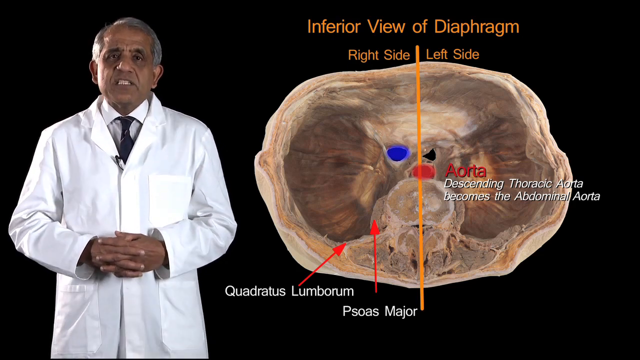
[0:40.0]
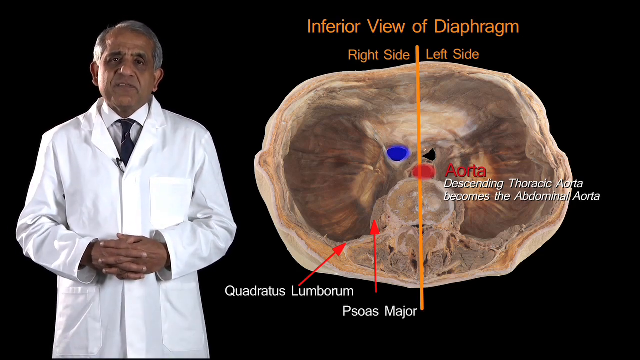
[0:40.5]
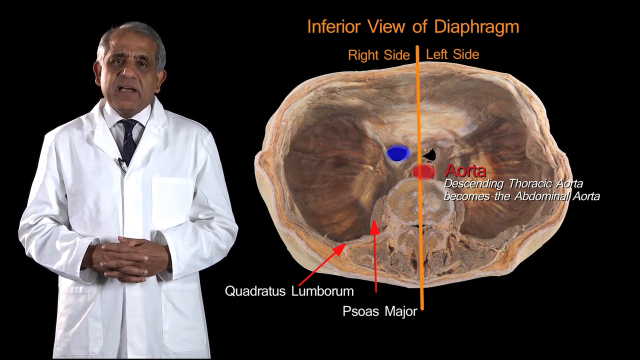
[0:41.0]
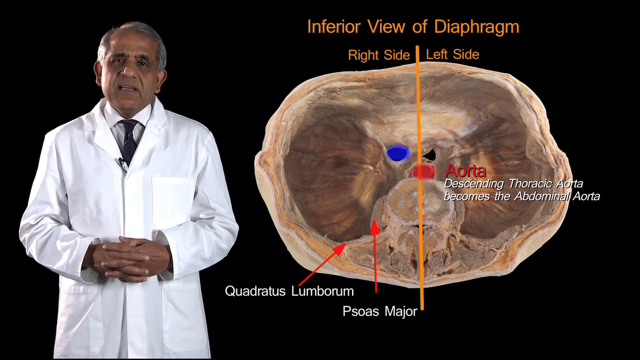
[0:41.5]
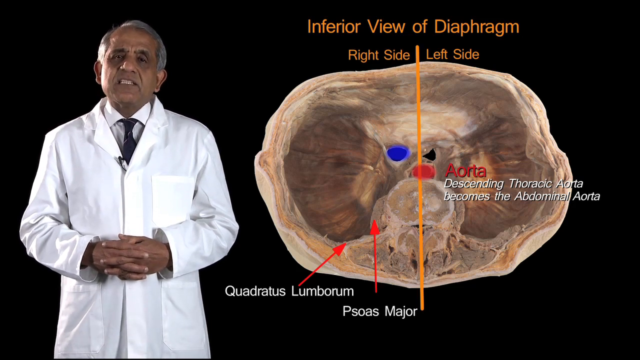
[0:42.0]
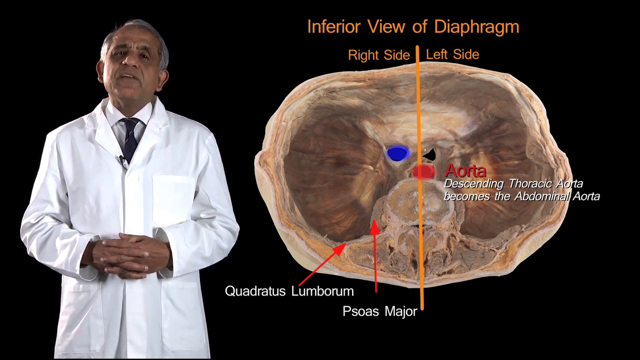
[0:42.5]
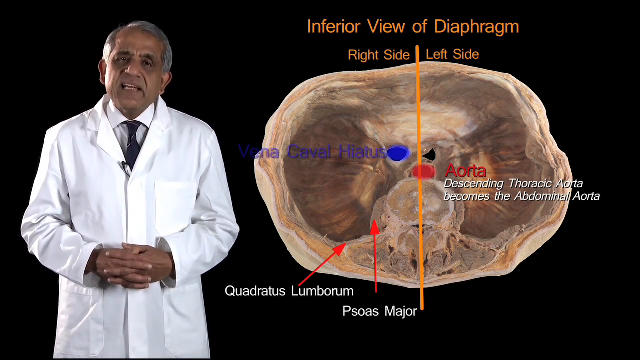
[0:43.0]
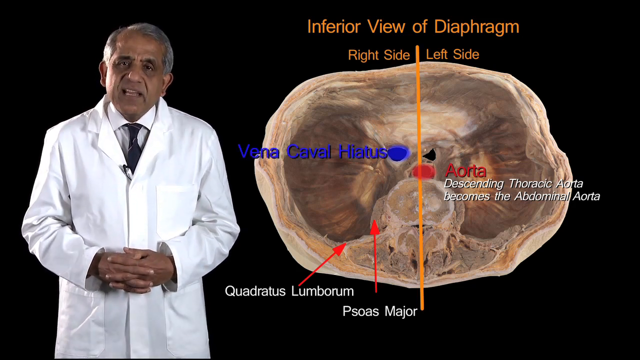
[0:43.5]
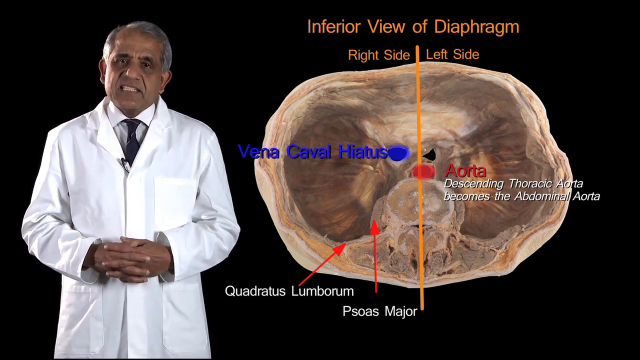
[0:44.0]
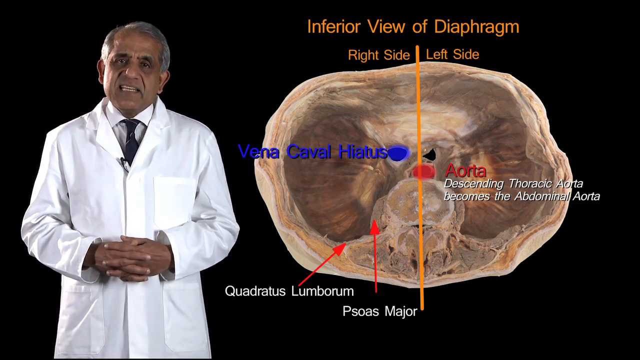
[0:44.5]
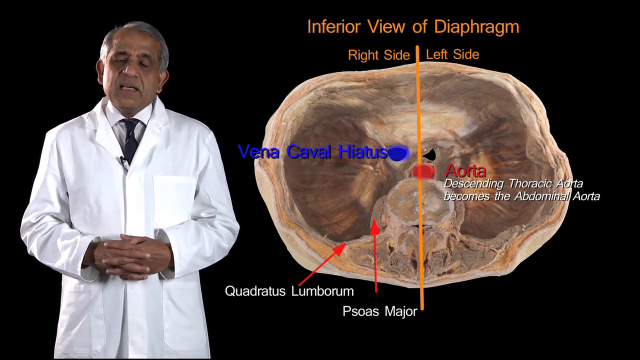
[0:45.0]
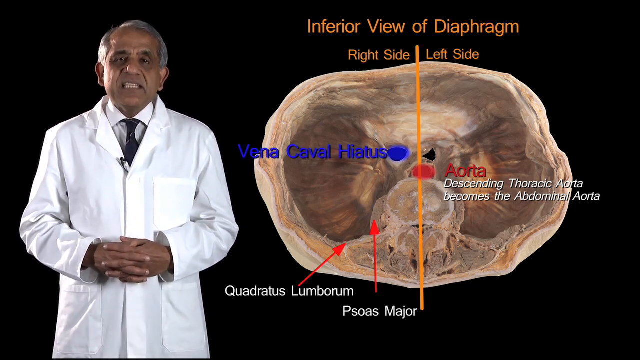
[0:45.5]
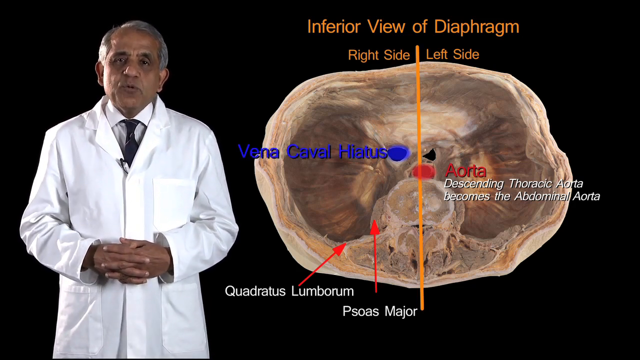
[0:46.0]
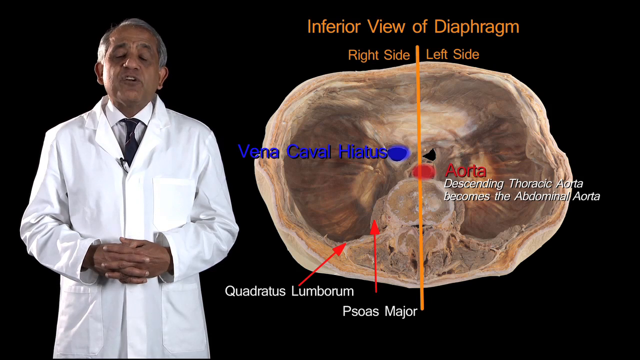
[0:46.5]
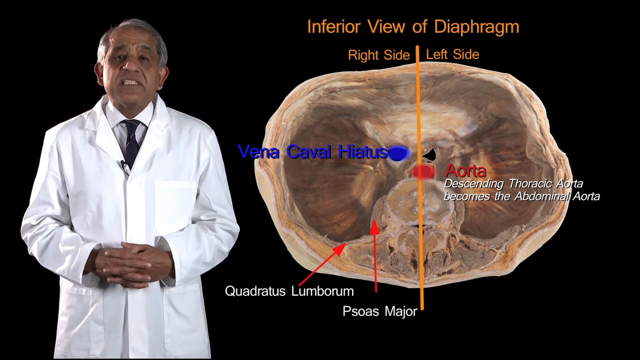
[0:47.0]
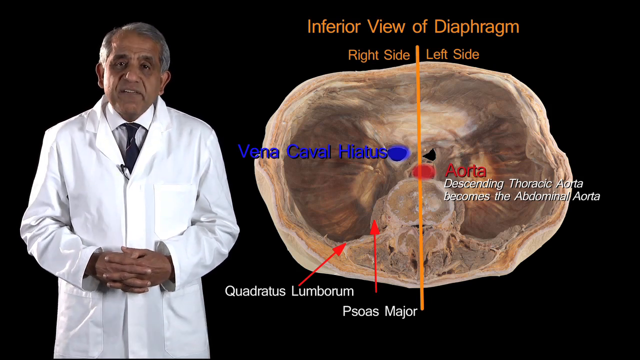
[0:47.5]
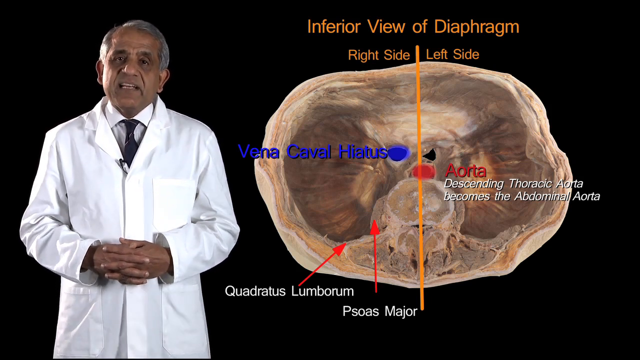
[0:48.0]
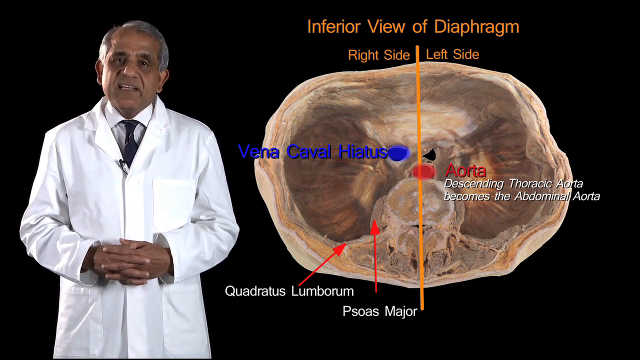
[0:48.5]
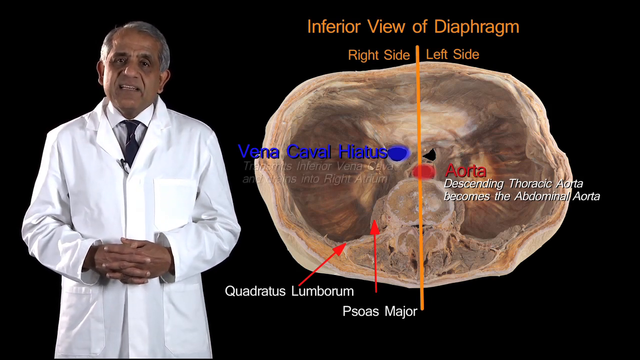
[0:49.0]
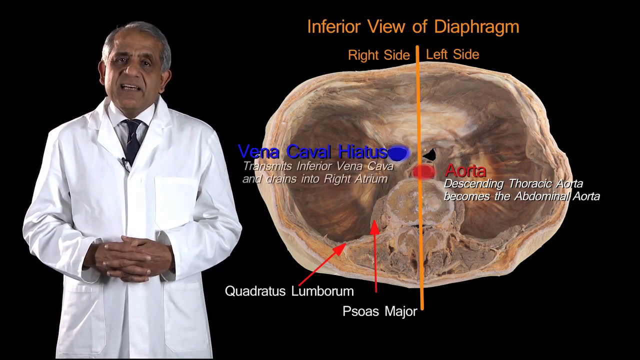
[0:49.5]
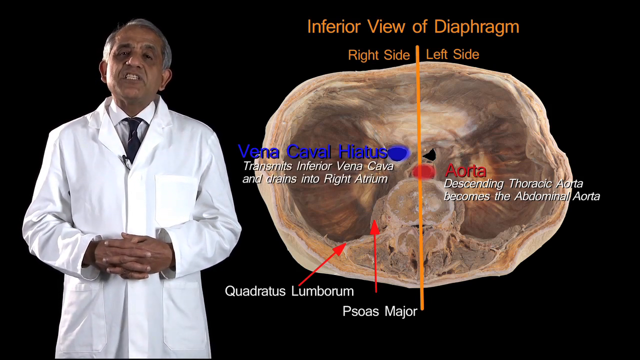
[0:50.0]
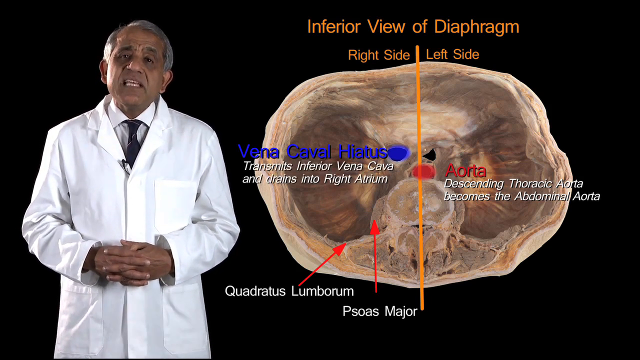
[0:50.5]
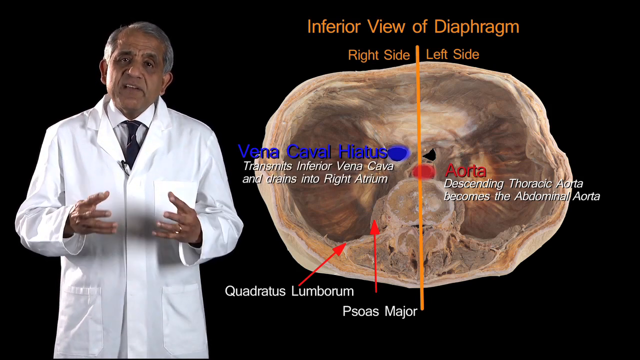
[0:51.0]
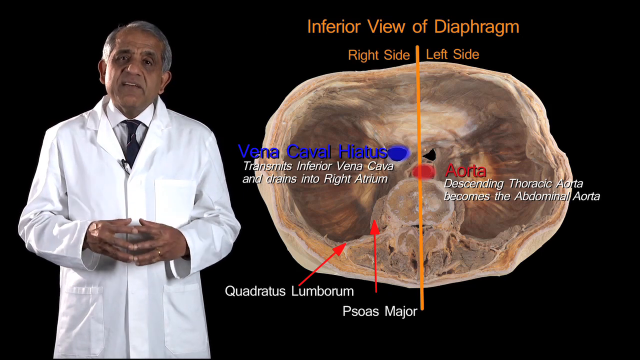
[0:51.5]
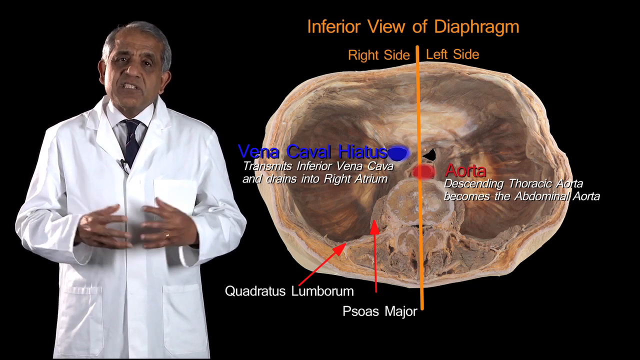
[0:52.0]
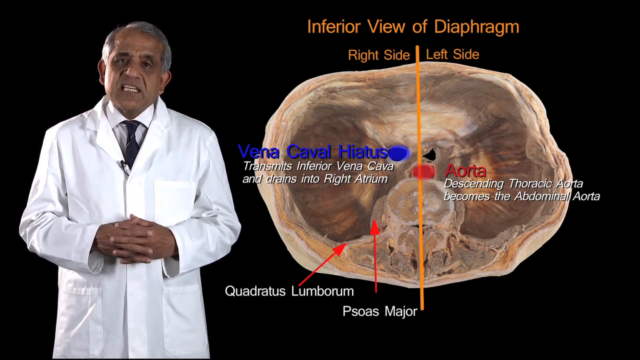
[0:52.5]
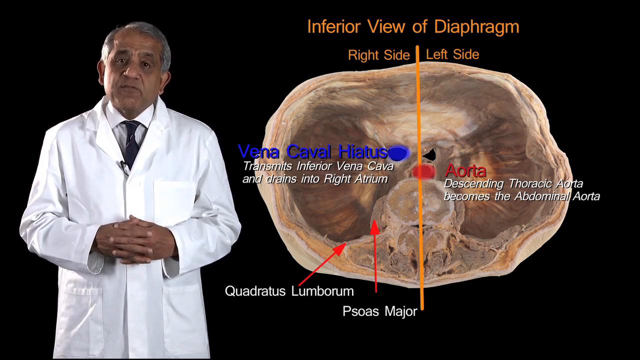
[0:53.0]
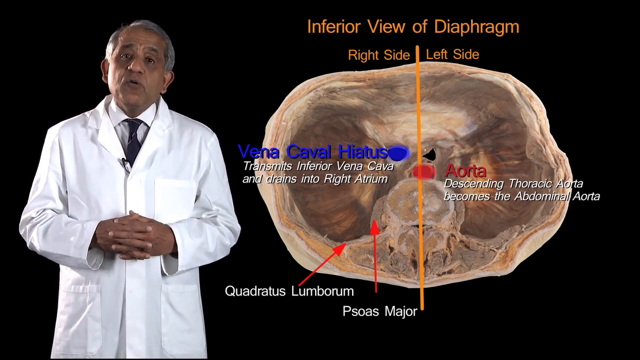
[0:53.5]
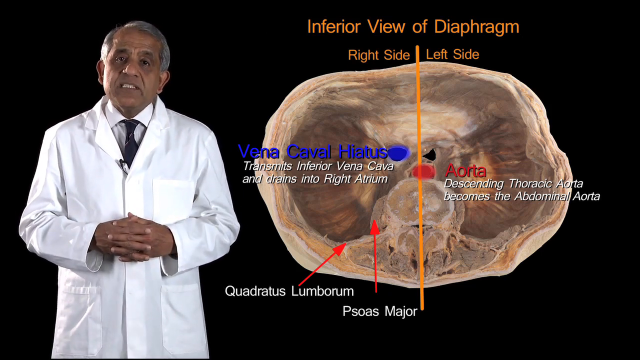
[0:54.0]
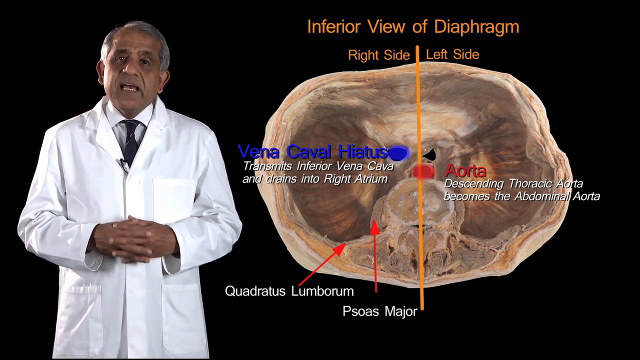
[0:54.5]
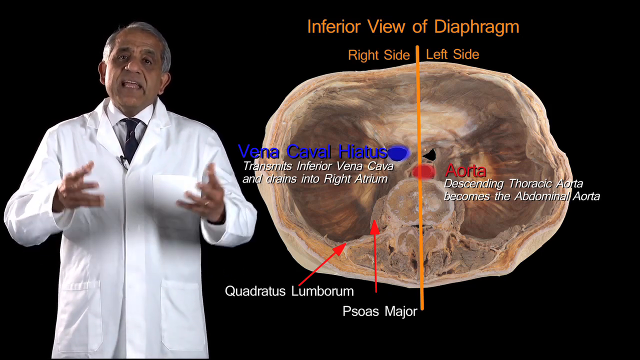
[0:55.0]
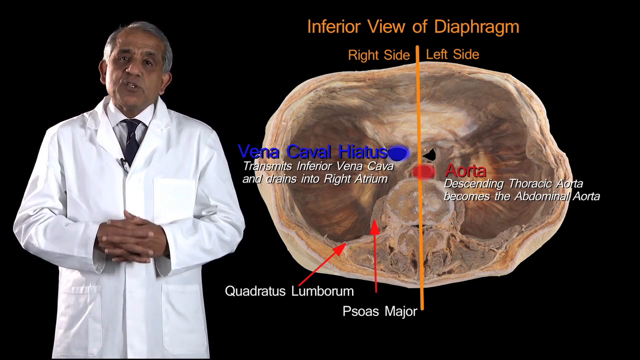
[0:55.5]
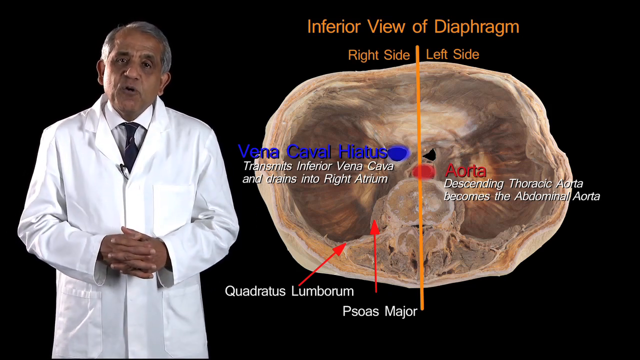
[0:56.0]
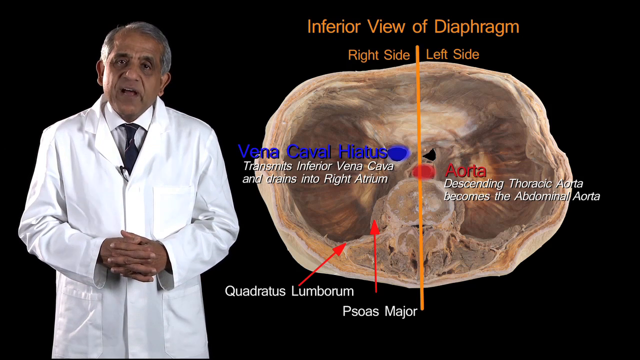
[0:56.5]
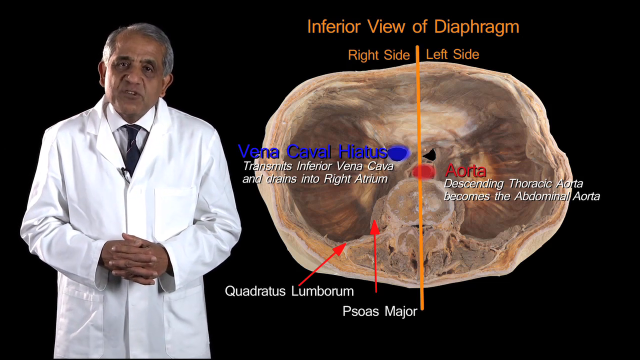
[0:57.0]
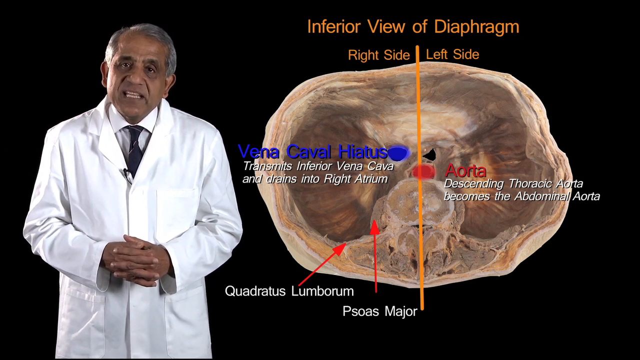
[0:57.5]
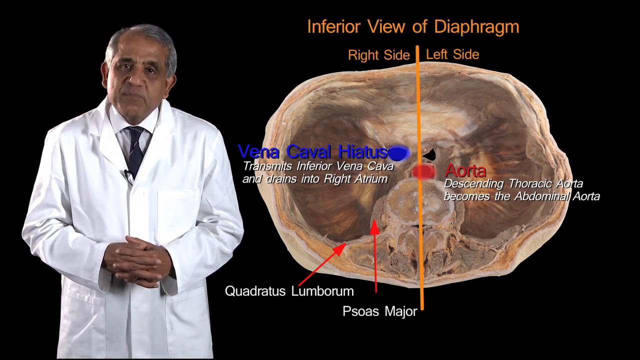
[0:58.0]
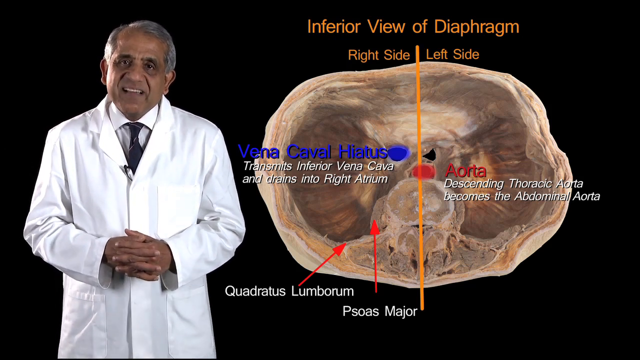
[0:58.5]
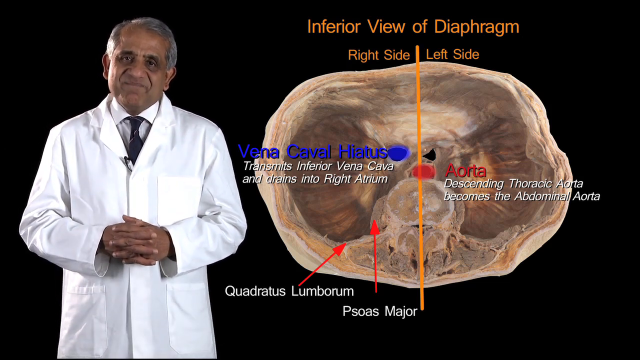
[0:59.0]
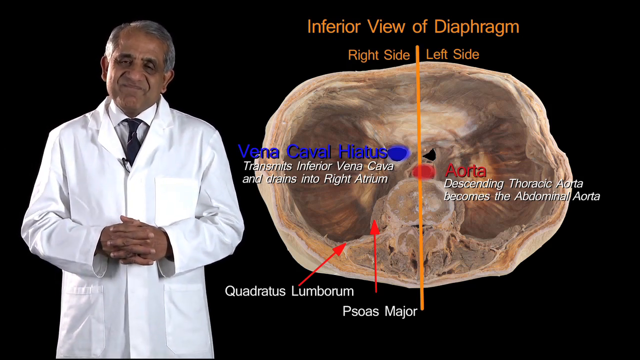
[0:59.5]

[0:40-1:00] The scene stays the same on a black background. The same professor is on the left, dressed in a white jacket with a white shirt and dark coloured tie; he is an older Asian gentleman with greyish hair. To his right is the picture of the diaphragm, labelled as the inferior view of the diaphragm, with "right side" and "left side" and notes for the quadratus lumborum, the psoas major and the aorta, with "descending thoracic aorta becomes the abdominal aorta" underneath the aorta. A blue dot is on the right side of the inferior view of the diaphragm. The professor carries on talking, and then the note for the blue dot appears in large blue lettering: "vena caval hiatus". He continues talking, and underneath the blue writing more notes appear: "transmits inferior vena cava and drains into right atrium".